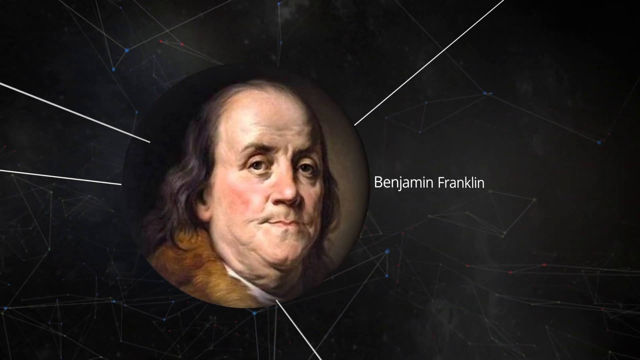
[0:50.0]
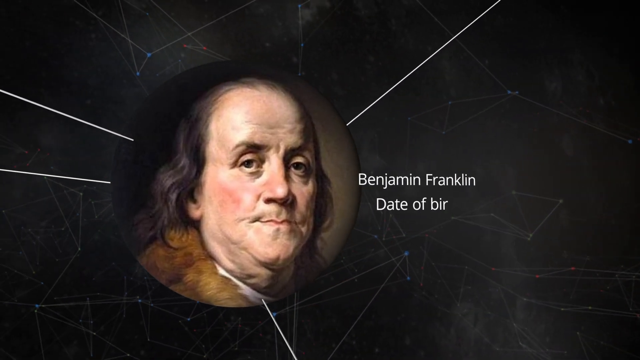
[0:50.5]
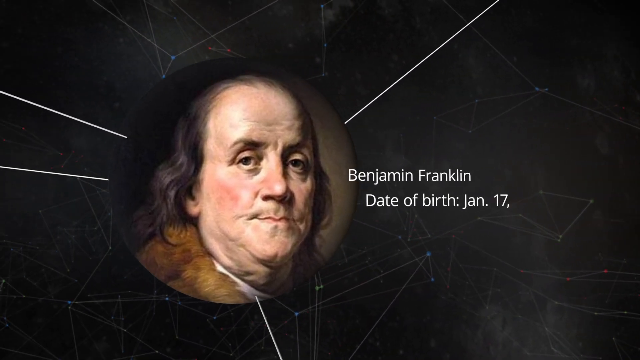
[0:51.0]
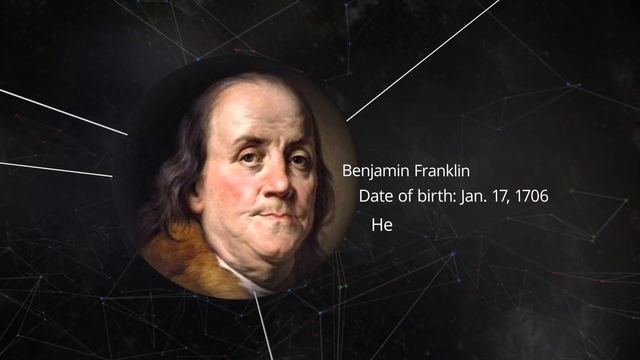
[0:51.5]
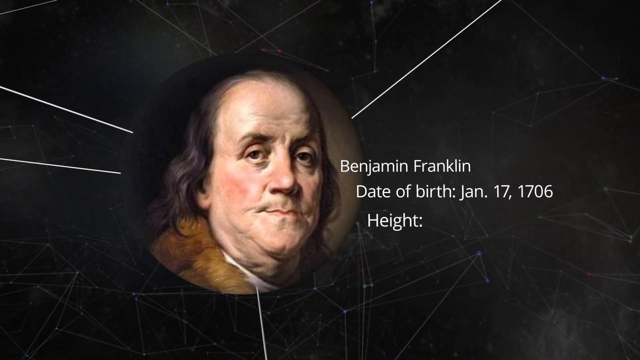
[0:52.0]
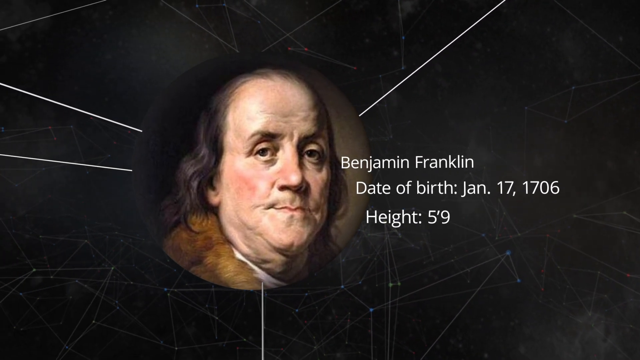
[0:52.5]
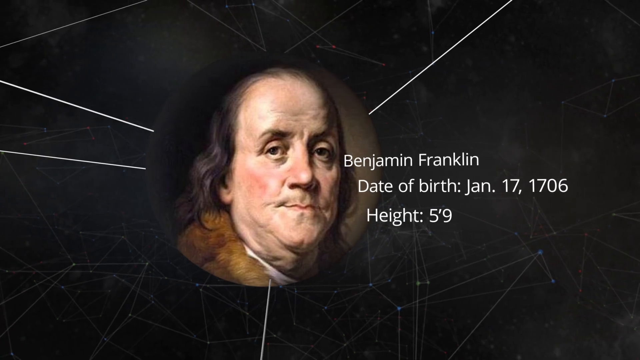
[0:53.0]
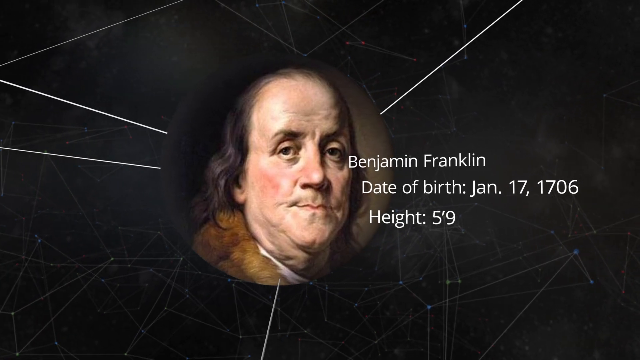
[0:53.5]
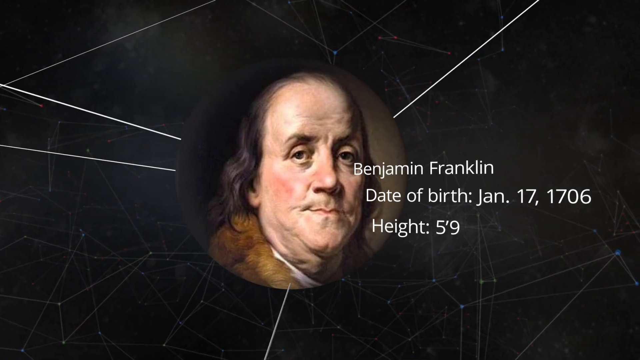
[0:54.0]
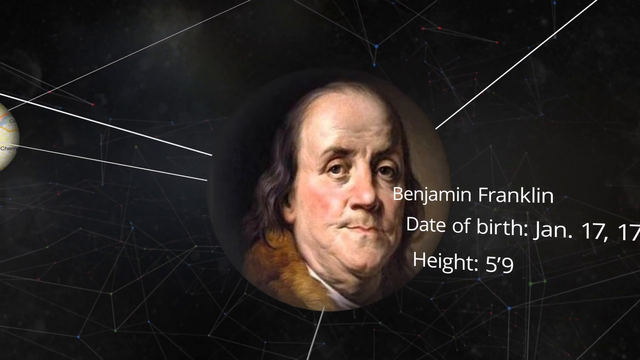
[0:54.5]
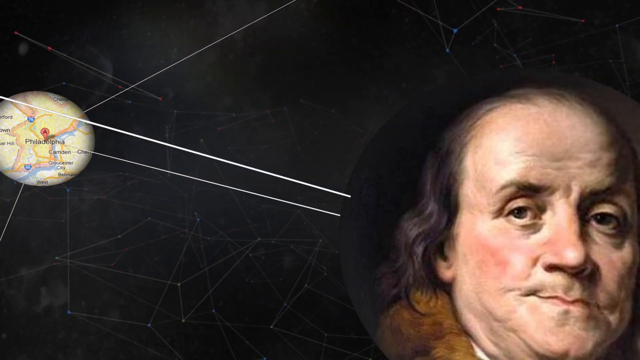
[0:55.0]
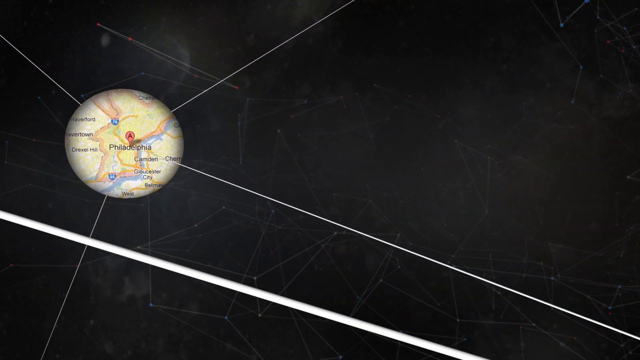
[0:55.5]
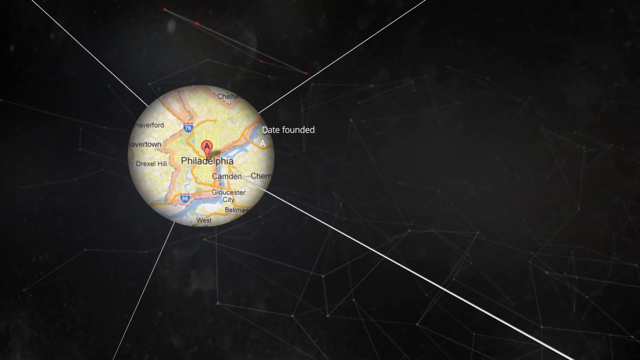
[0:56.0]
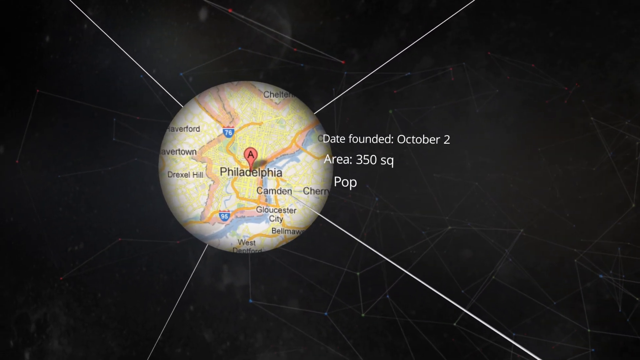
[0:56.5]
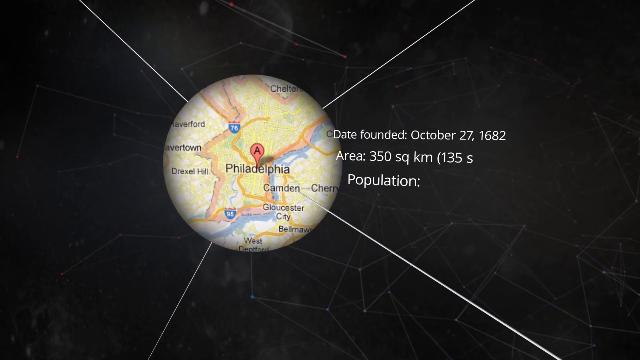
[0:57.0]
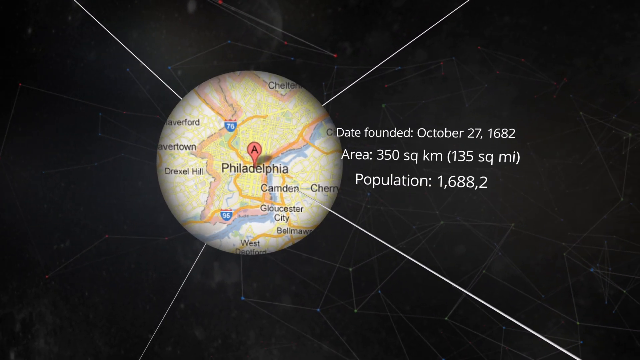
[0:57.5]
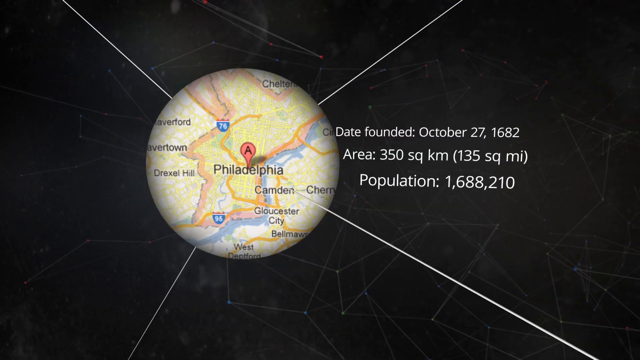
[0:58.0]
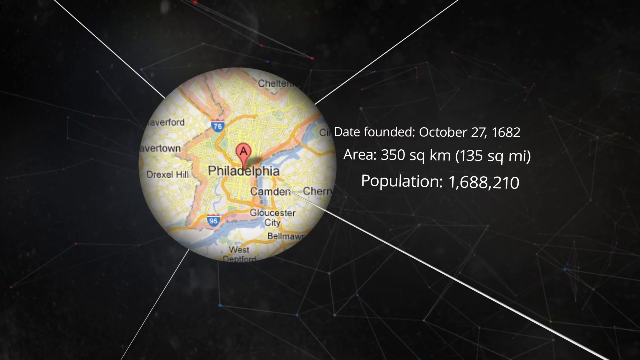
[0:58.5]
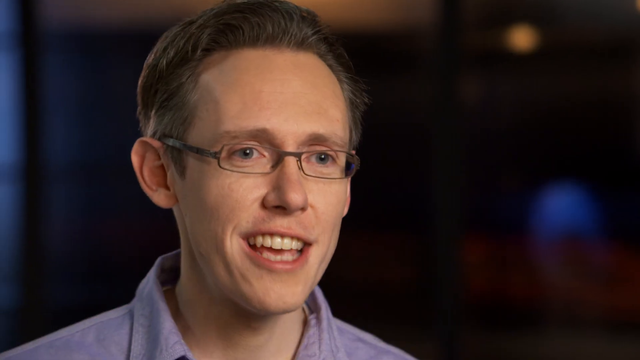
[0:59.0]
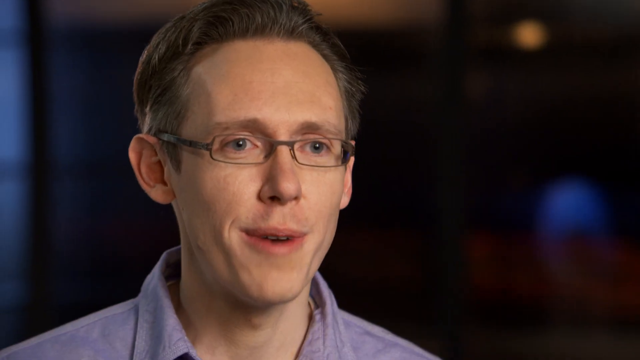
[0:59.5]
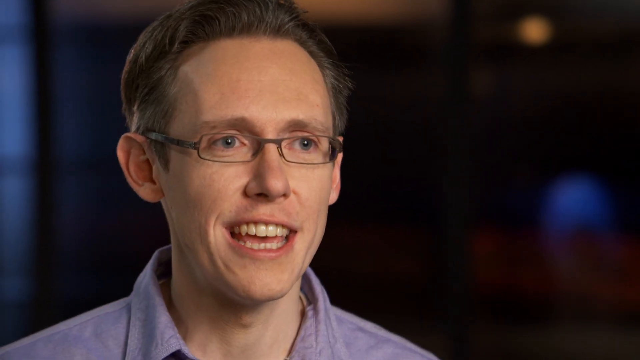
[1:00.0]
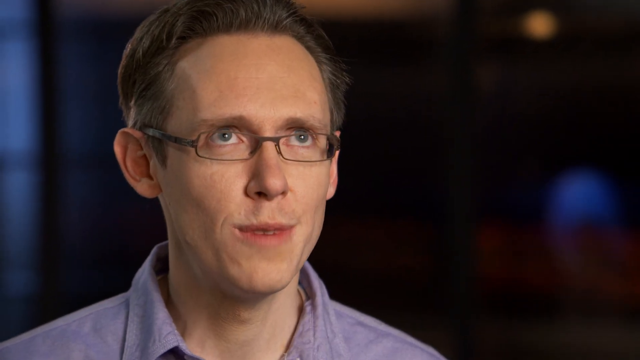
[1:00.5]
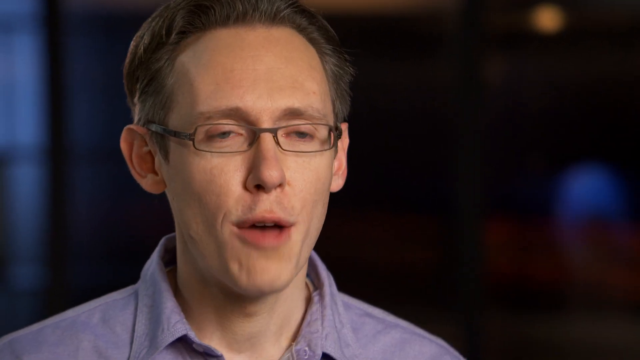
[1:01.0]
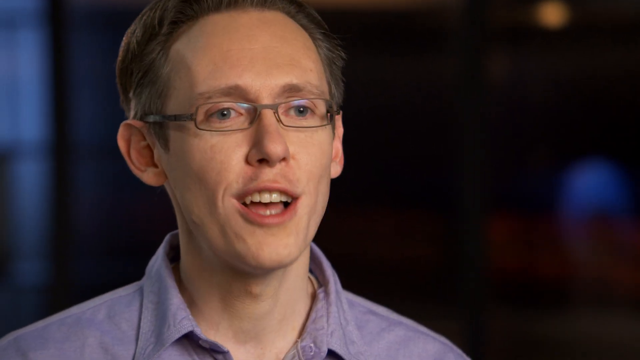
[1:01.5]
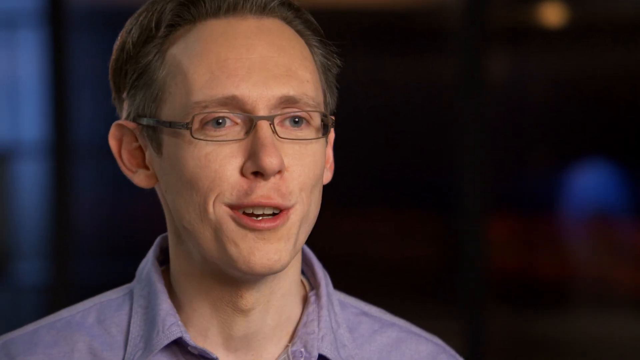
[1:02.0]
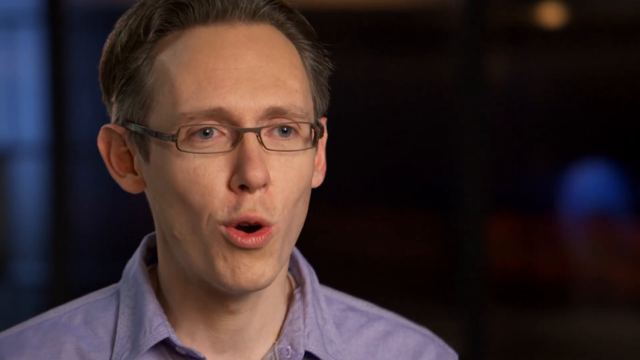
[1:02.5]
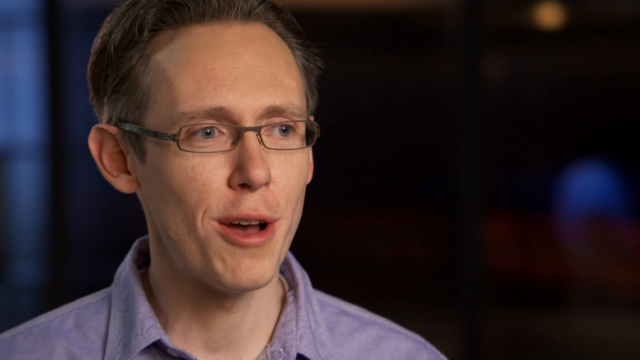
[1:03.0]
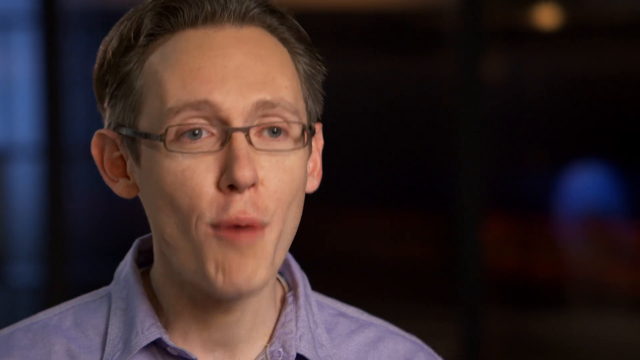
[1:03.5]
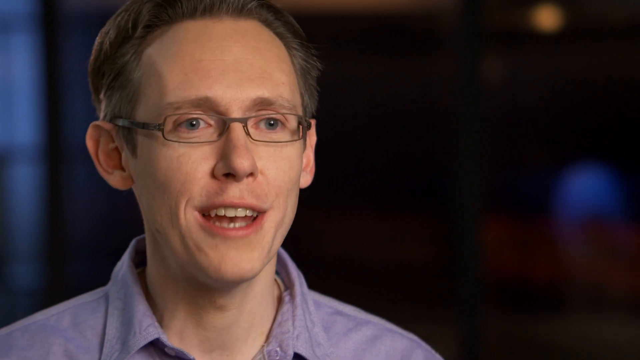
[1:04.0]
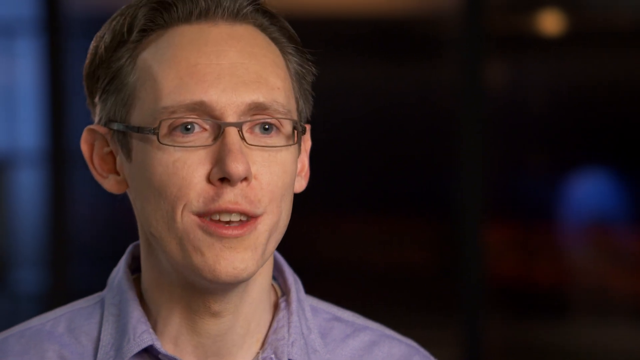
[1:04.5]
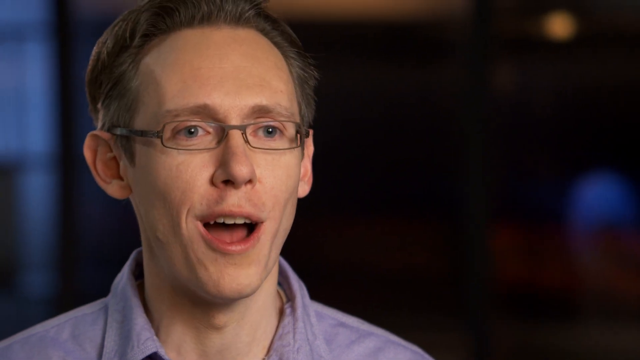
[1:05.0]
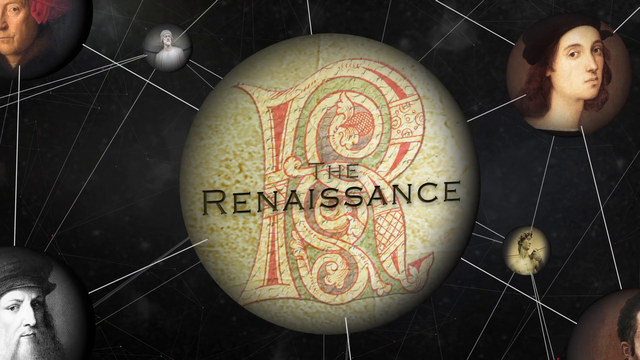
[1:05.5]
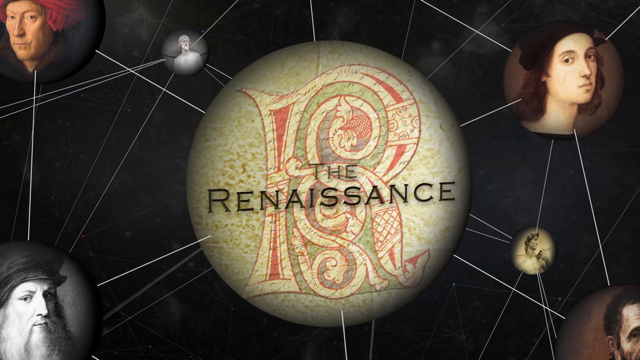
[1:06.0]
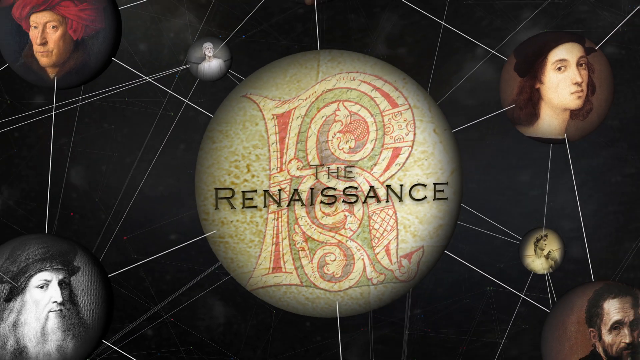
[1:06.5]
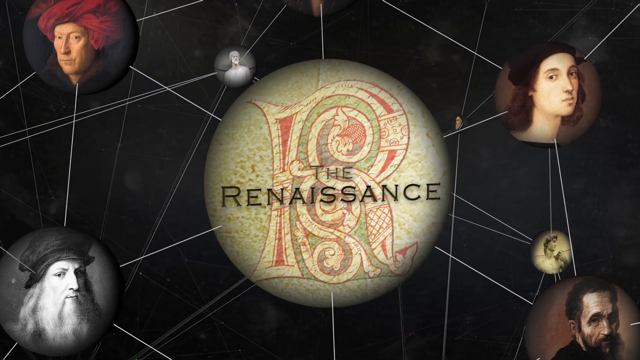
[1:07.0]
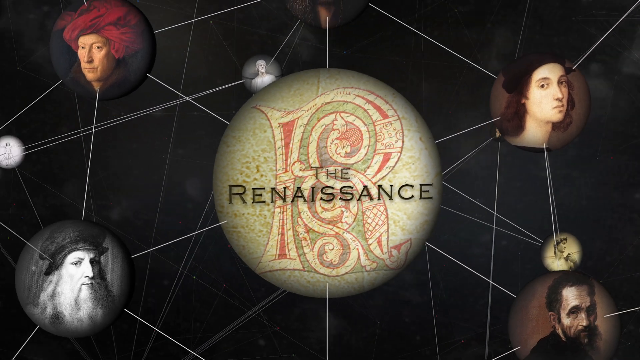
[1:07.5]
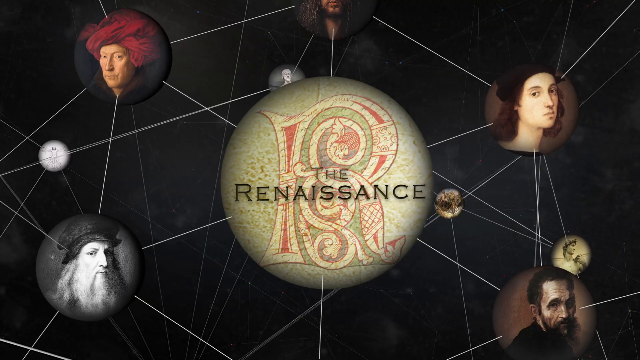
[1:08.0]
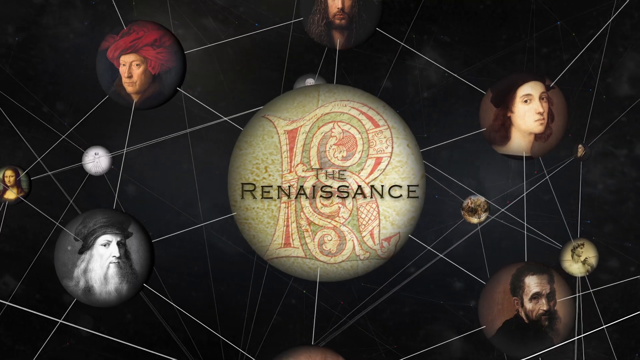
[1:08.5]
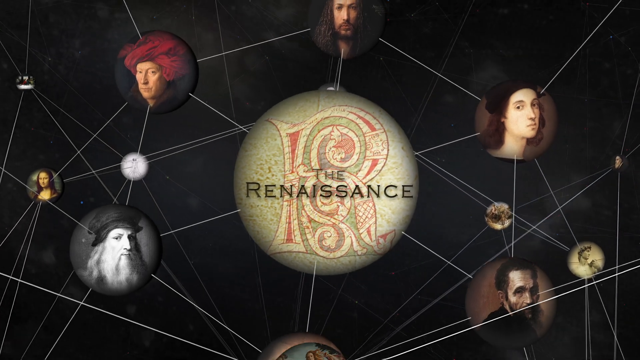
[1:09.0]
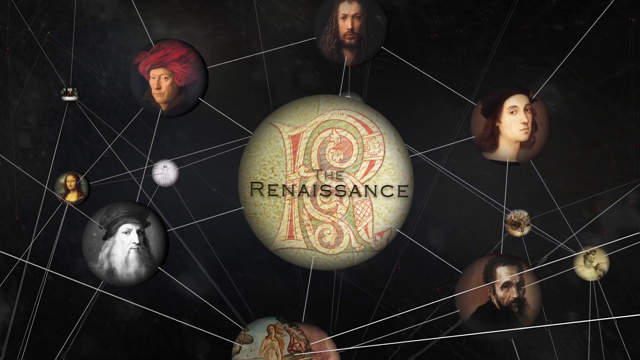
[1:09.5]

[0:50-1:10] A circle holds an image of Benjamin Franklin, and to its right is the text "Benjamin Franklin", "date of birth January 17th, 1706" and "height 5'9"". White lines come out of the circle, presumably connecting it to other nodes in the diagram. The focus shifts to a different node showing a map of Philadelphia with a red dot labeled A, alongside the text "Date founded October 27th, 1682", "area 350 square kilometers, 135 square miles" and "population 1,688,210". A man in a purplish collared shirt then talks to the camera. The diagram of nodes returns, with a circle in the middle containing a large stylized calligraphy R filled with patterns and the text "The Renaissance" superimposed on it. Lines run all around to other nodes that seem to show different people, perhaps from the Renaissance era.